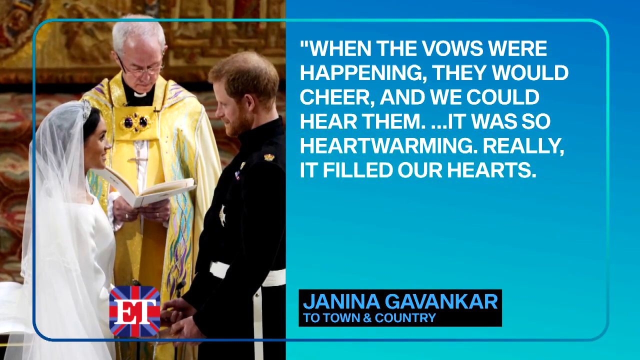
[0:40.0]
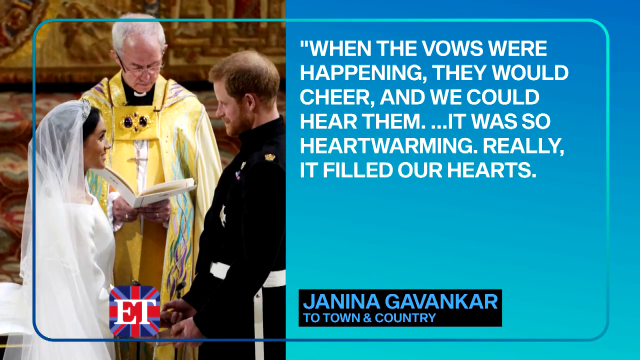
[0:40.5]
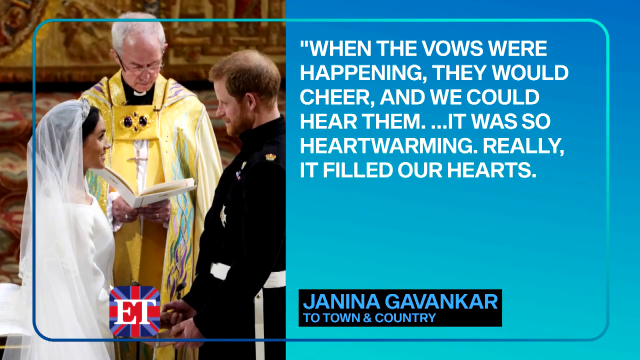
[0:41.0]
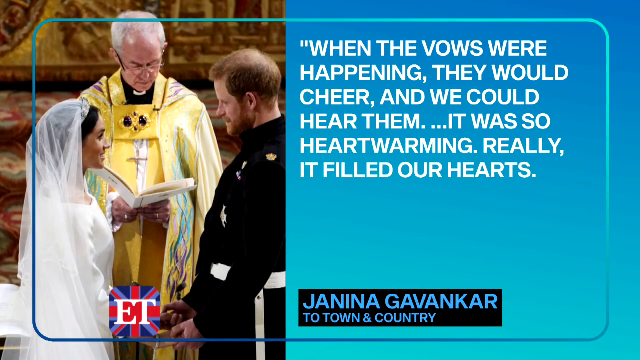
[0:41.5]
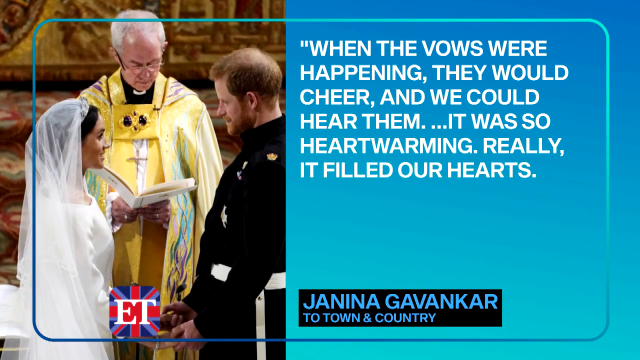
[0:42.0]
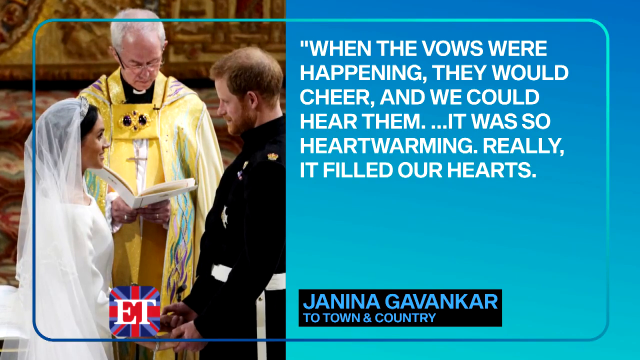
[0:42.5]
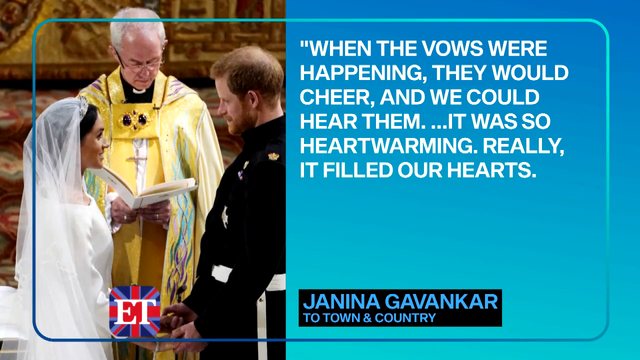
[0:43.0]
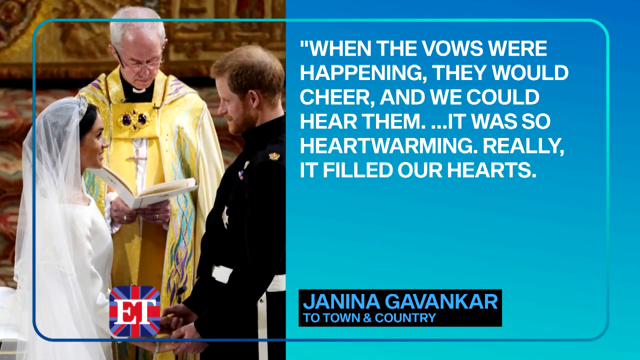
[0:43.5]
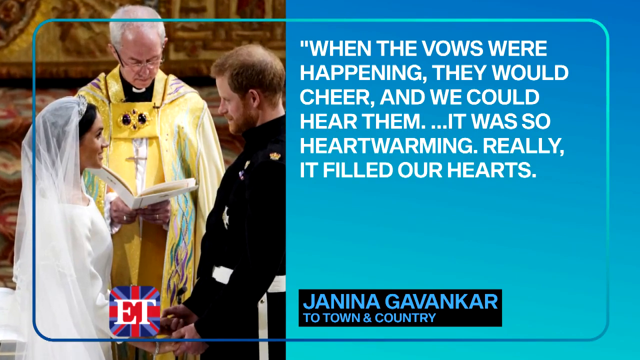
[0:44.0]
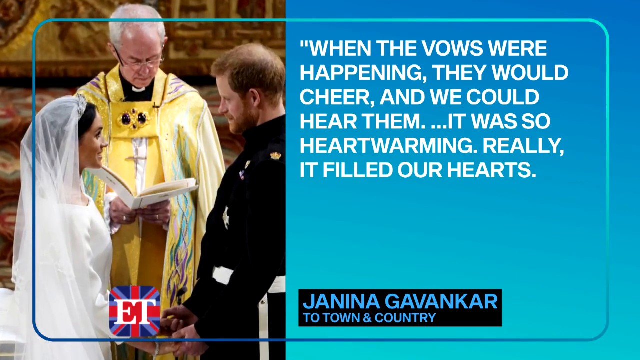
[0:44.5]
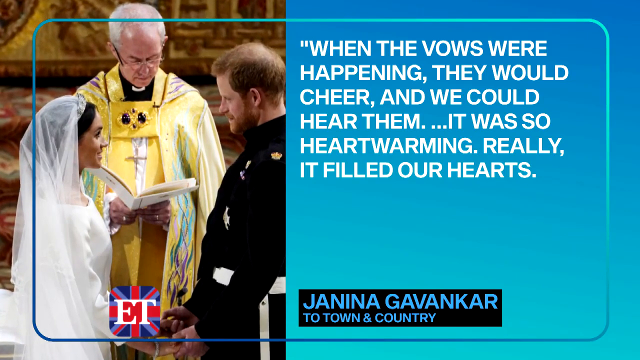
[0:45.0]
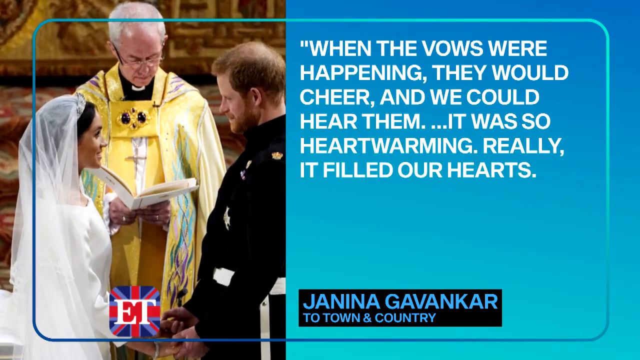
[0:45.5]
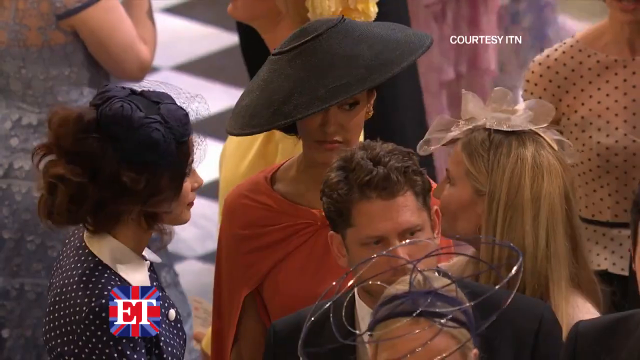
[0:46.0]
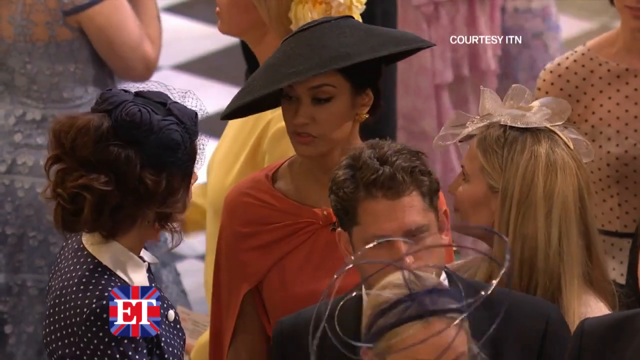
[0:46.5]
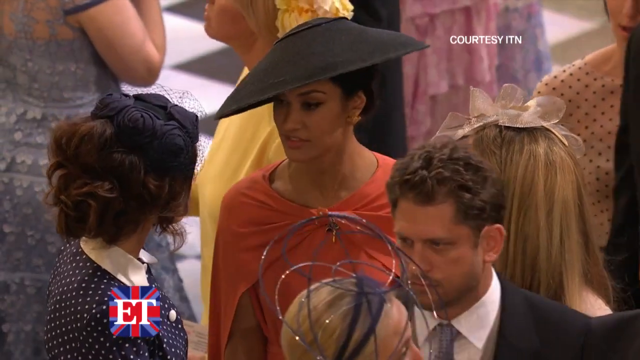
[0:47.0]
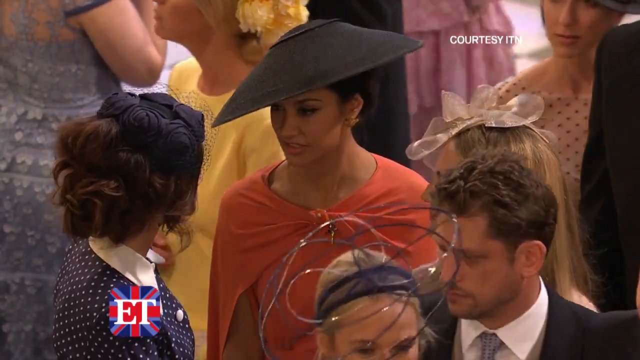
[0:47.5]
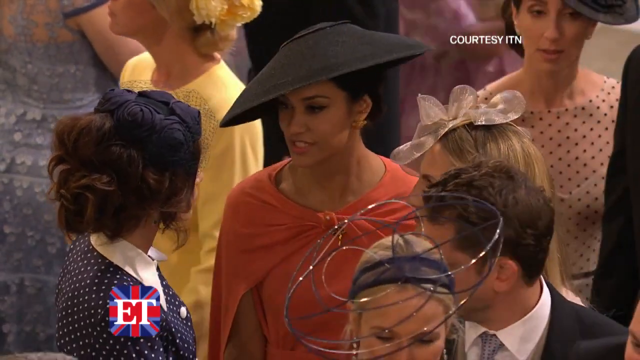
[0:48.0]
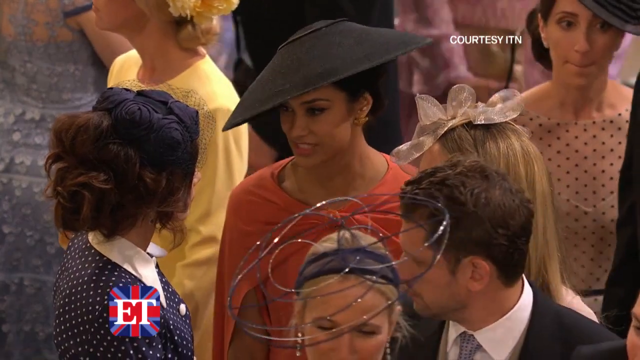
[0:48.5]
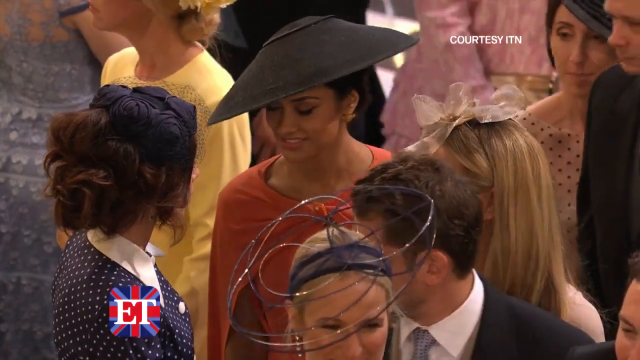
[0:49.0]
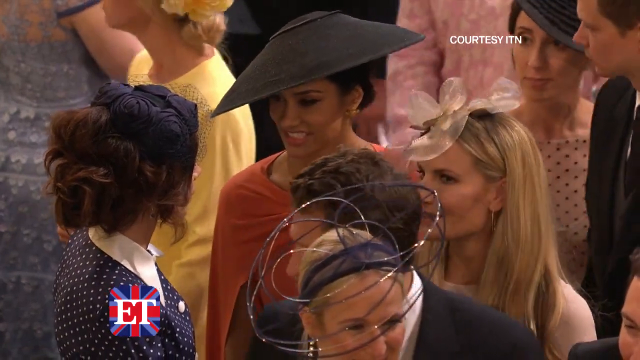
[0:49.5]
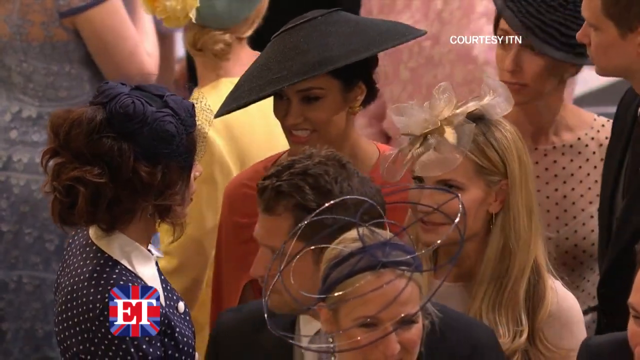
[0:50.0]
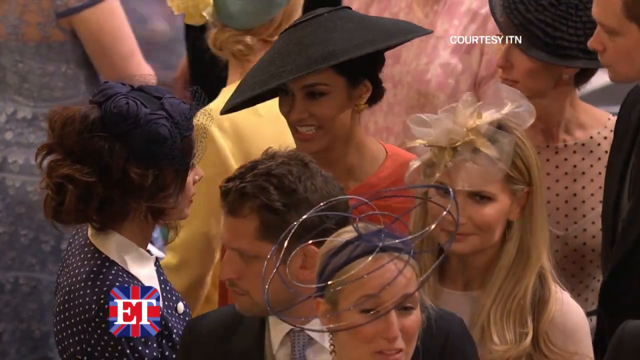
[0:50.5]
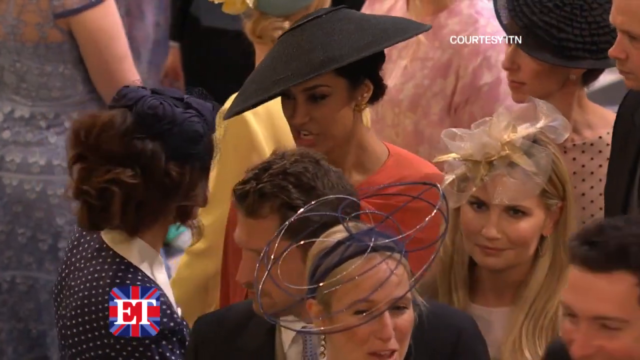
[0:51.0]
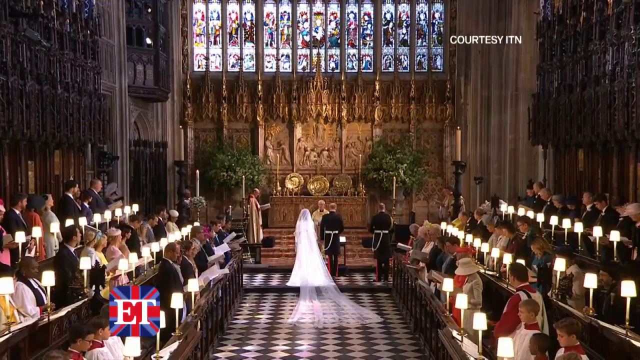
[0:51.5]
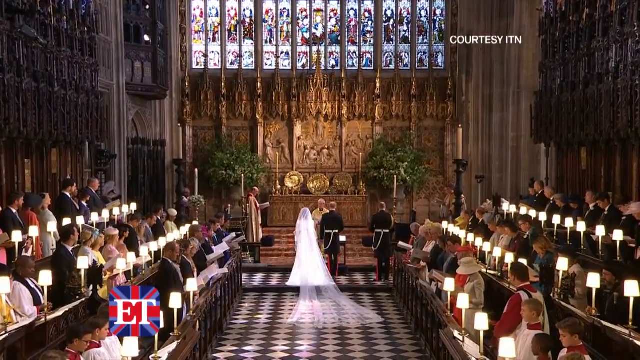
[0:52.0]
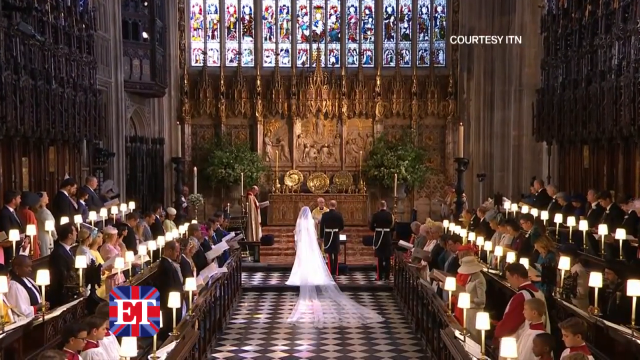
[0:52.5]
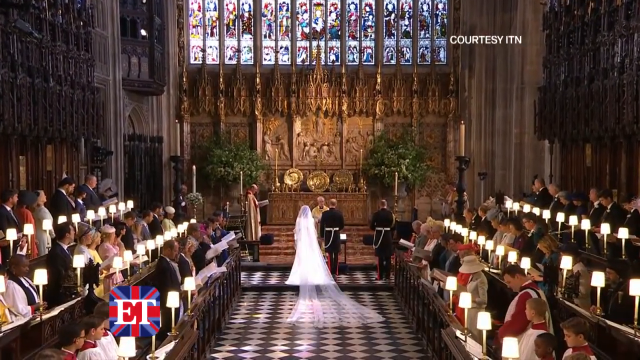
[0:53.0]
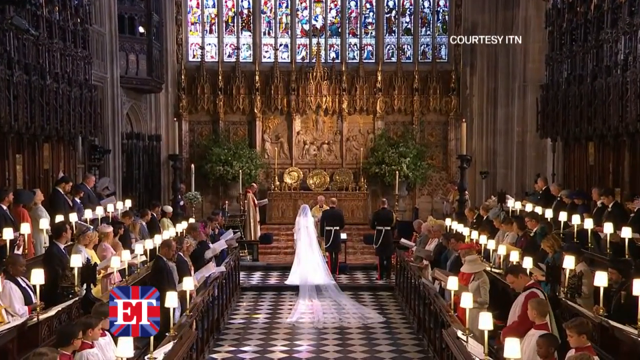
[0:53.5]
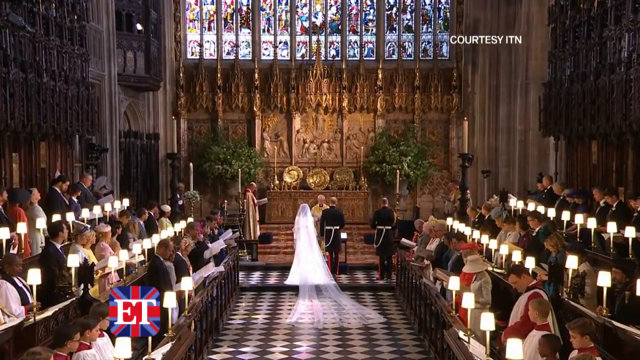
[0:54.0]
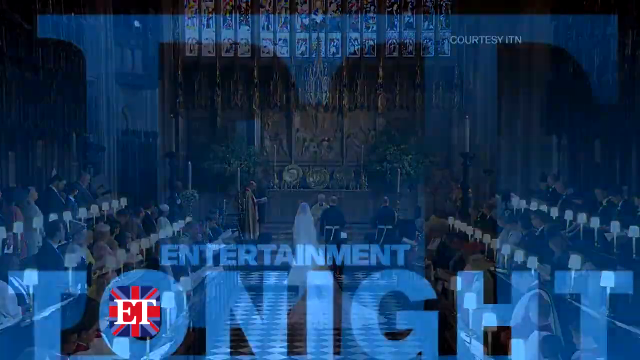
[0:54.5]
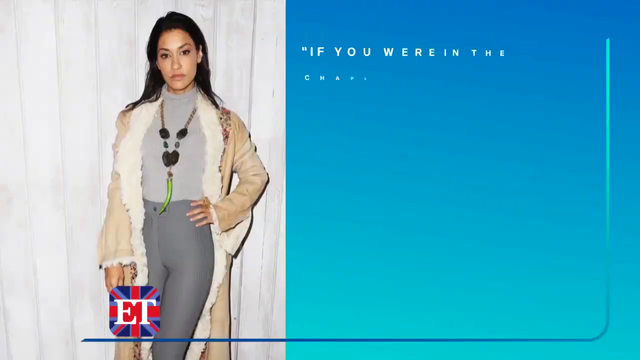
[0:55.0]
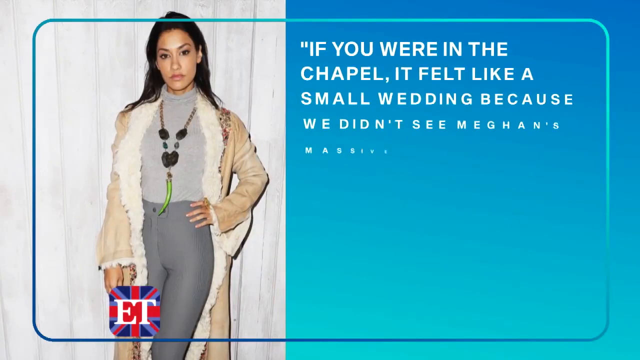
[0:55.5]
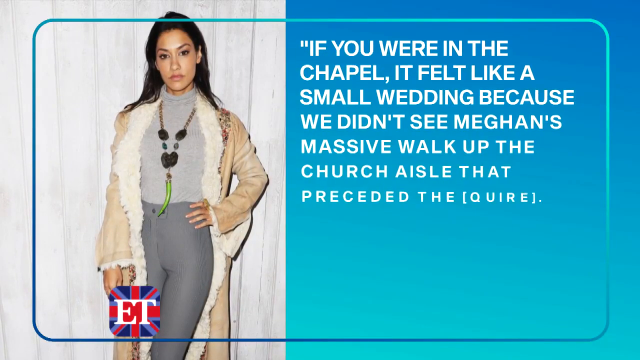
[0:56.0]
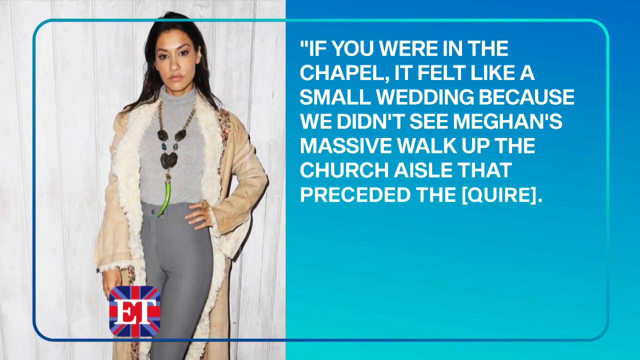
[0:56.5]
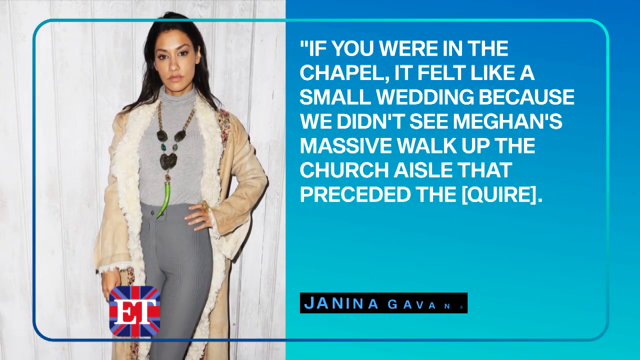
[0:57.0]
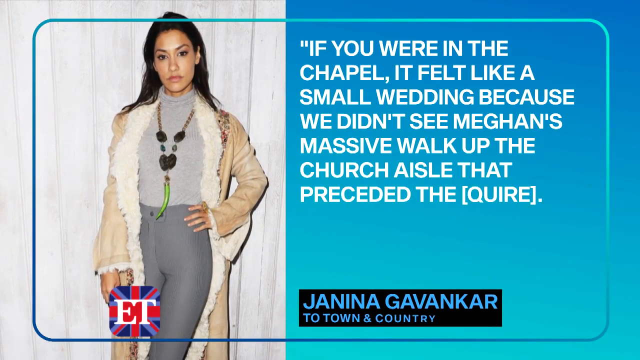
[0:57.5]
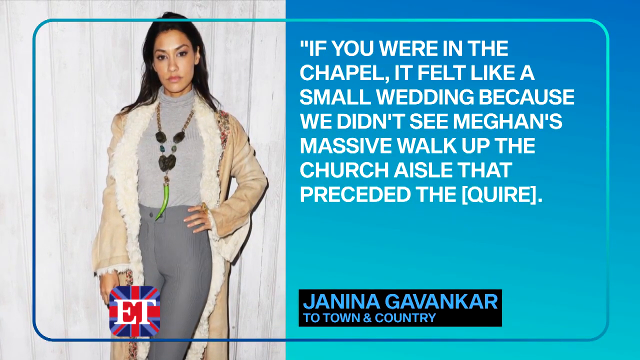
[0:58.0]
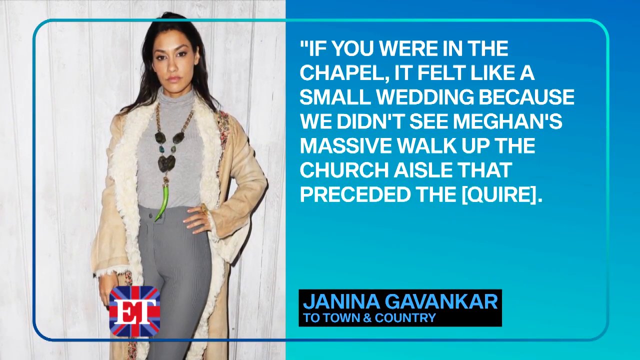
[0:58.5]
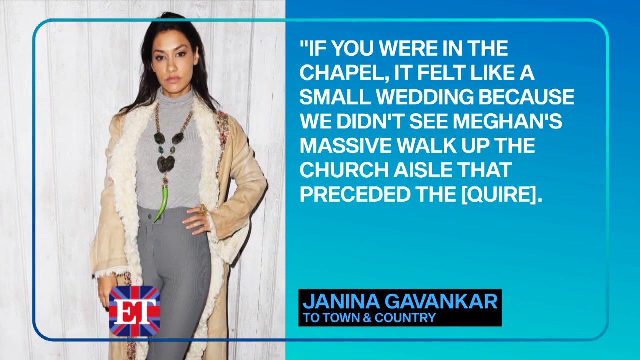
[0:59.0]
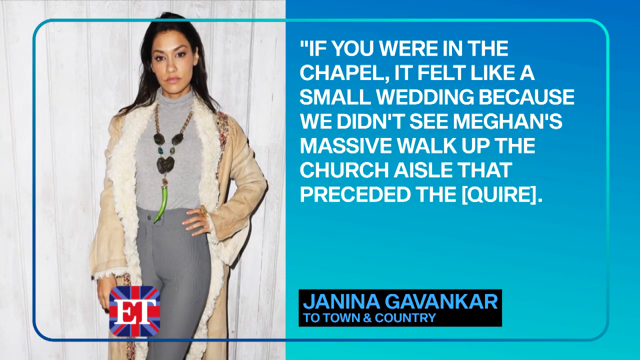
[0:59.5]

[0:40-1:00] The couple continues taking their vows with the priest. After the wedding, happy people in wedding attire celebrate, and the church is full of people holding candles. A lady then appears next to writing that reads "if you were in the chapel it felt like a small wedding", attributed to Janina Gafang, with her image right beside the text. The words "when the vows were happening they would cheer and we could hear them it was so heartwarming" appear, attributed to the prince. Images of the priest are behind him while they take their vows; he holds a vows book in front of them, and the couple, dressed in wedding attire, look at each other with smiling faces.